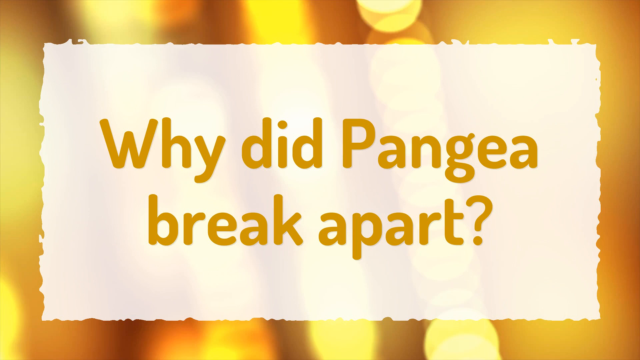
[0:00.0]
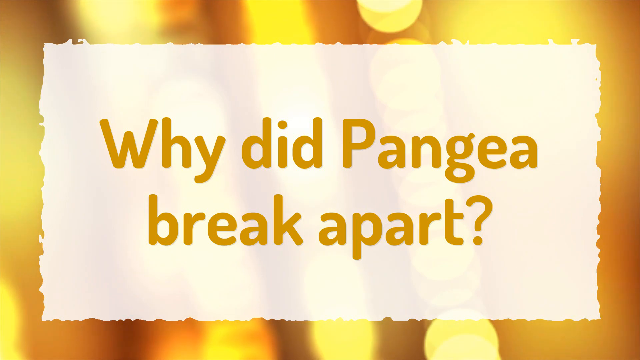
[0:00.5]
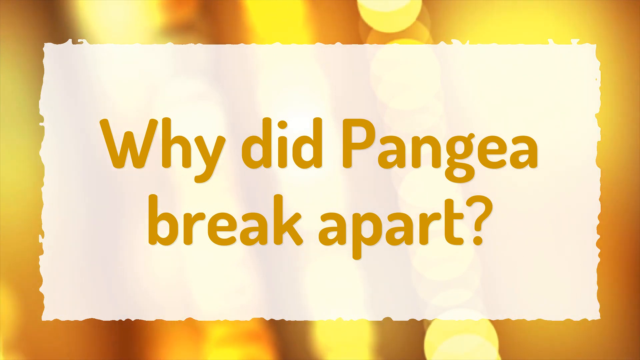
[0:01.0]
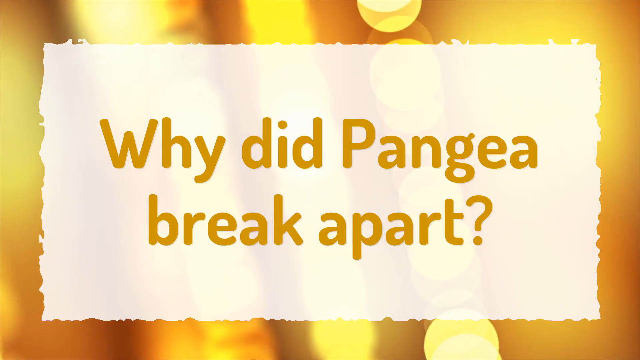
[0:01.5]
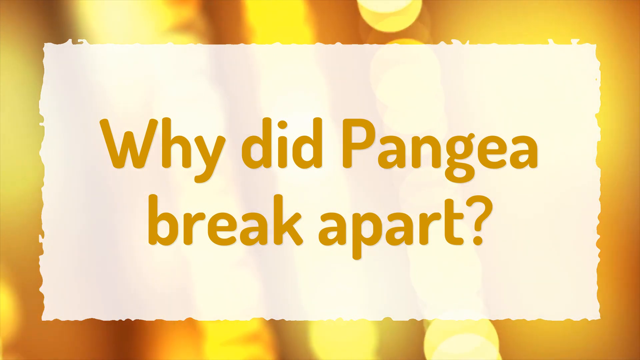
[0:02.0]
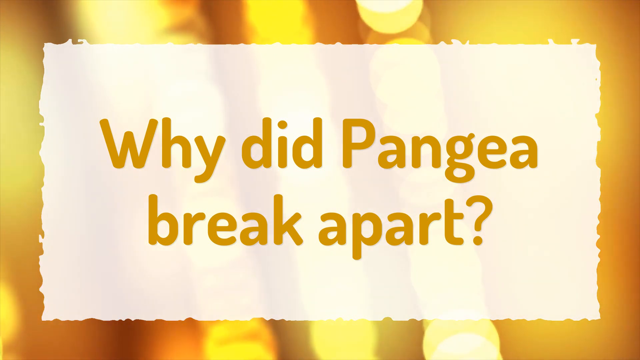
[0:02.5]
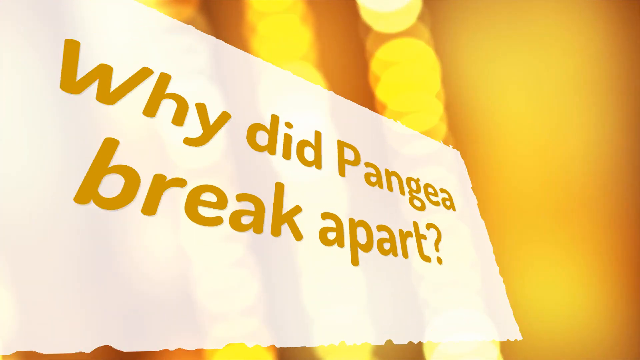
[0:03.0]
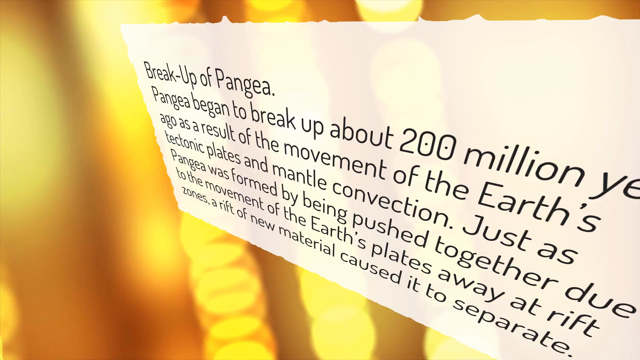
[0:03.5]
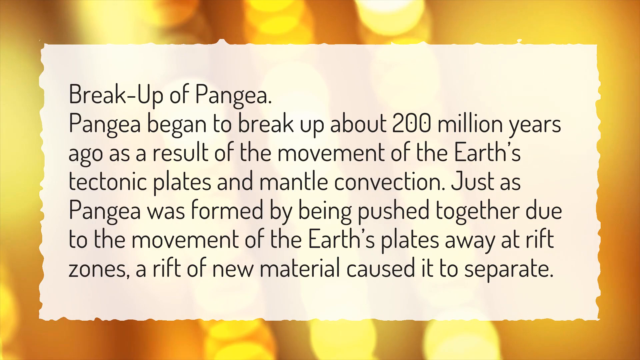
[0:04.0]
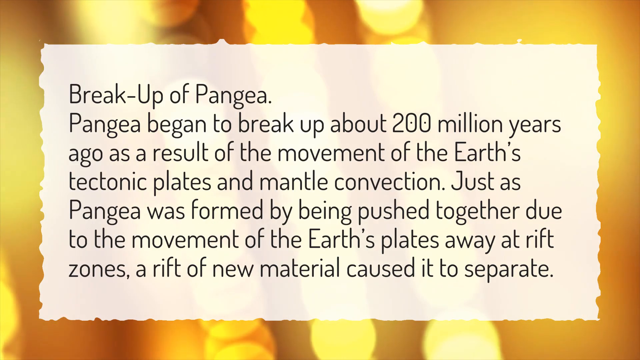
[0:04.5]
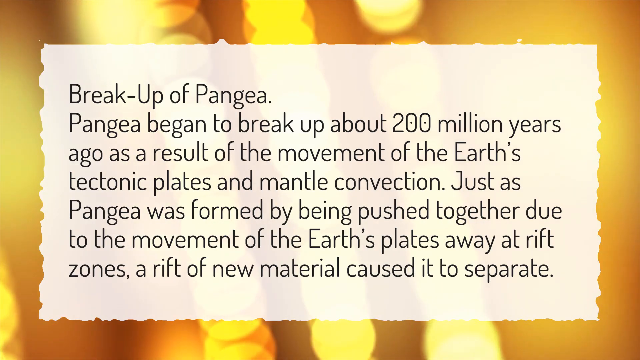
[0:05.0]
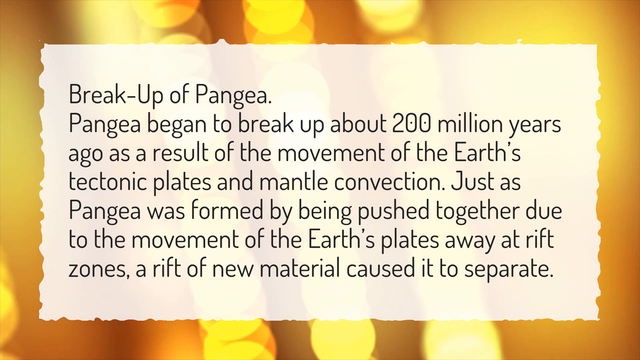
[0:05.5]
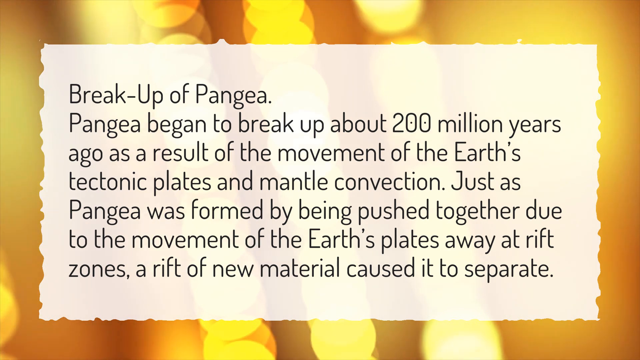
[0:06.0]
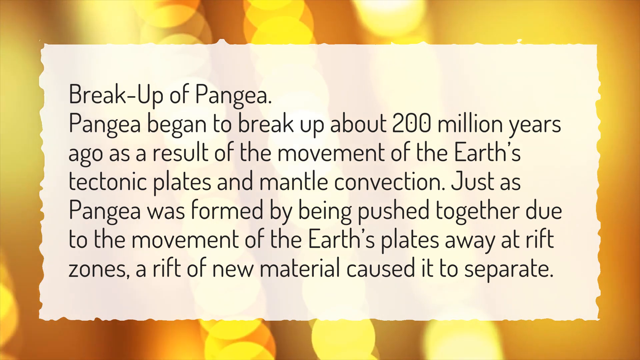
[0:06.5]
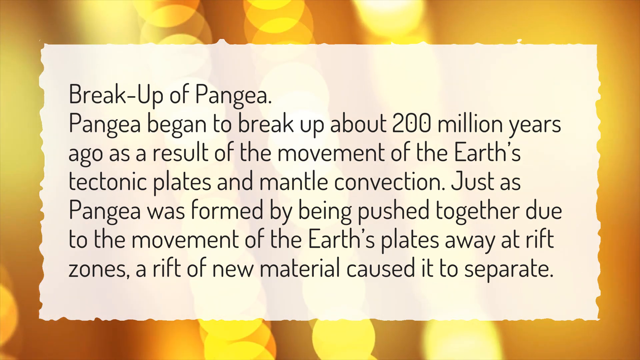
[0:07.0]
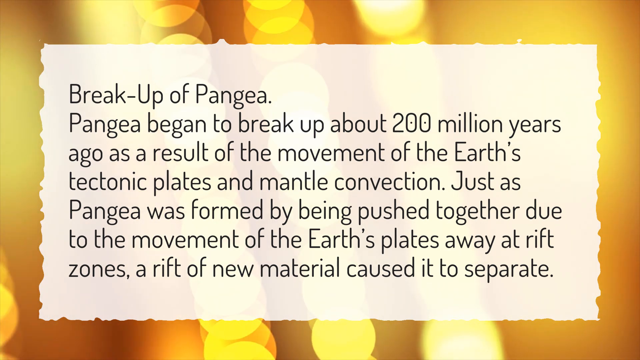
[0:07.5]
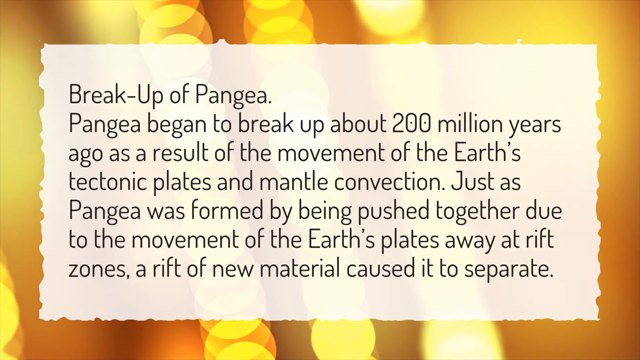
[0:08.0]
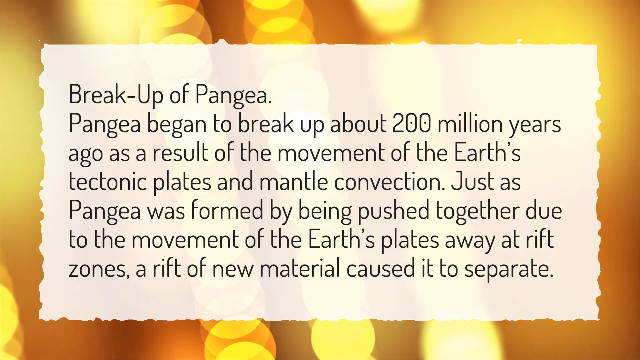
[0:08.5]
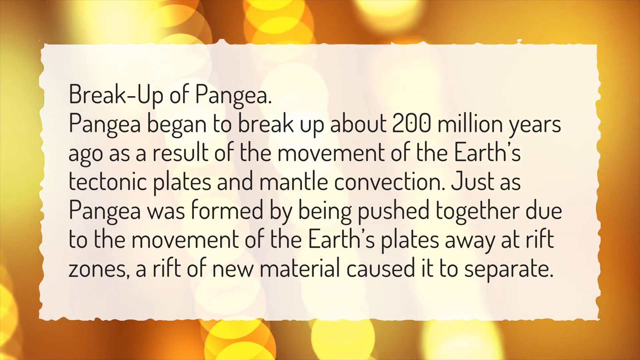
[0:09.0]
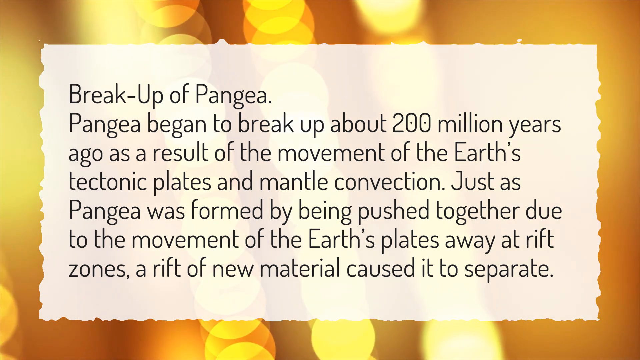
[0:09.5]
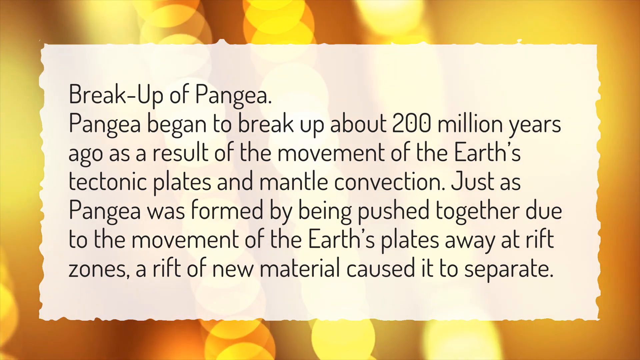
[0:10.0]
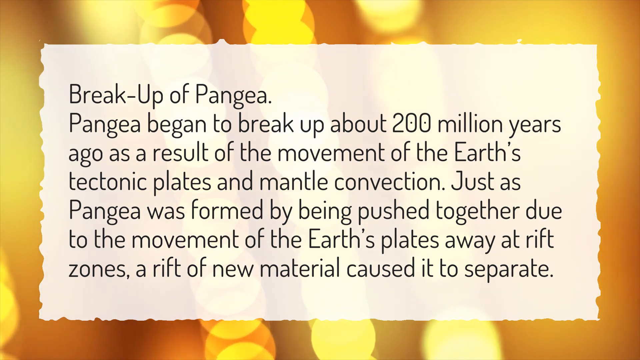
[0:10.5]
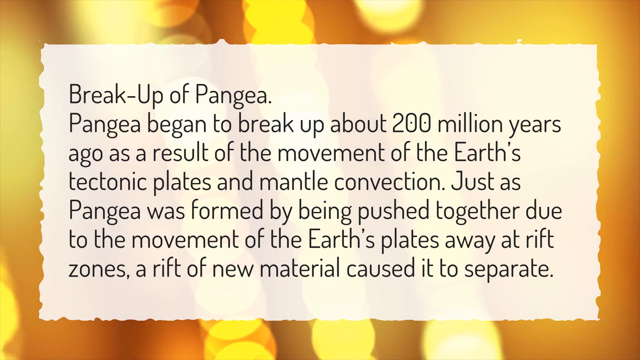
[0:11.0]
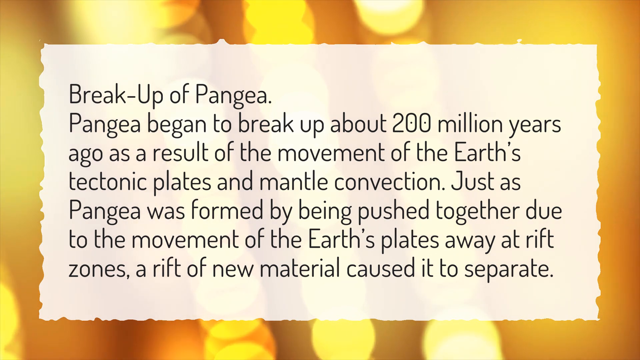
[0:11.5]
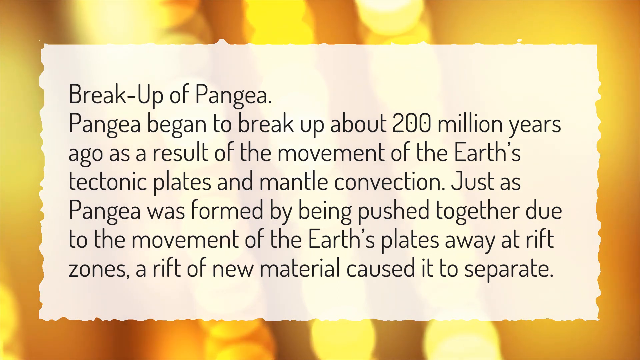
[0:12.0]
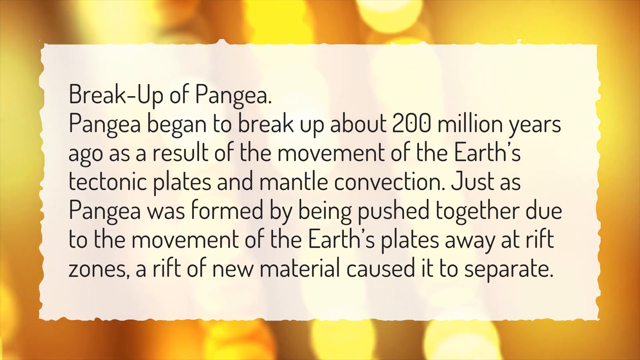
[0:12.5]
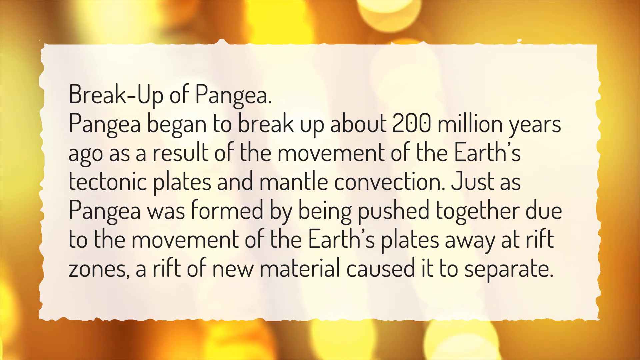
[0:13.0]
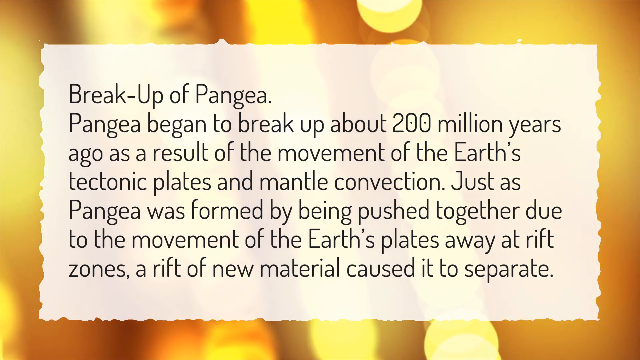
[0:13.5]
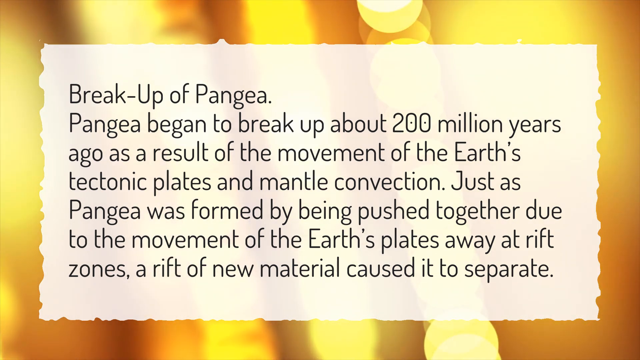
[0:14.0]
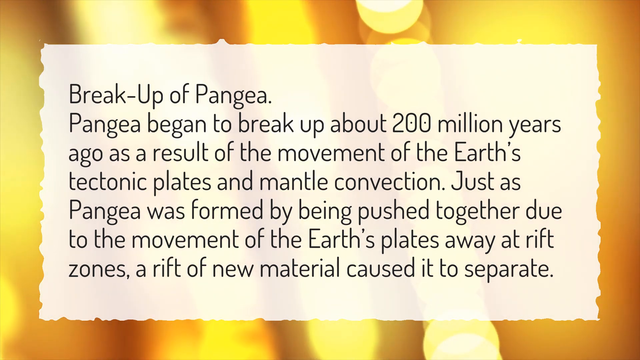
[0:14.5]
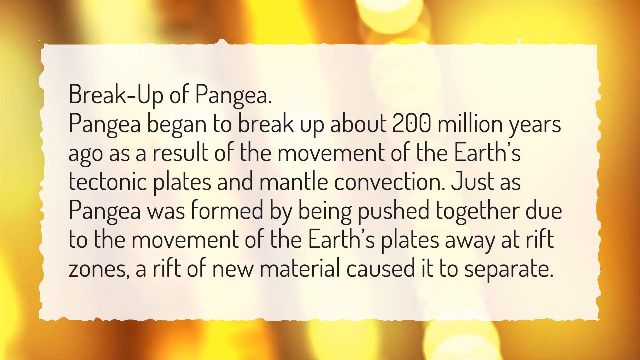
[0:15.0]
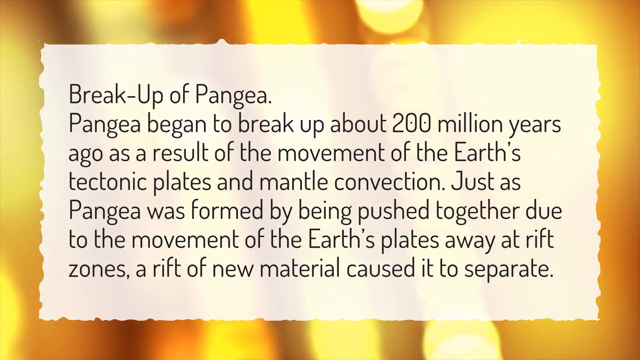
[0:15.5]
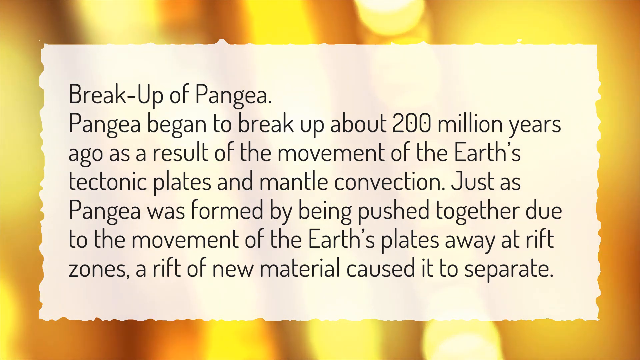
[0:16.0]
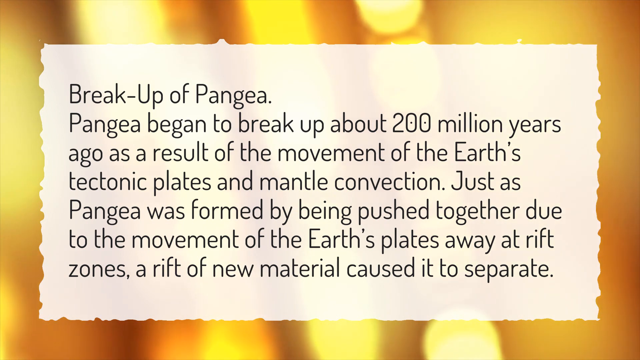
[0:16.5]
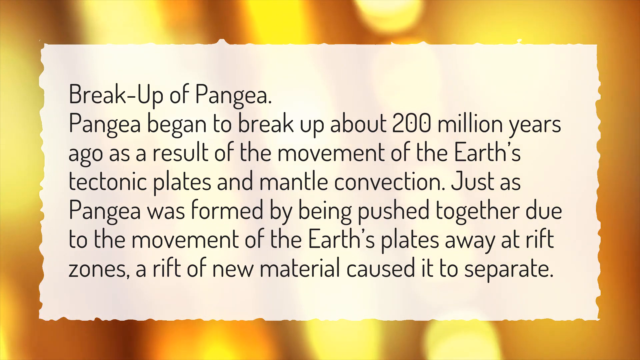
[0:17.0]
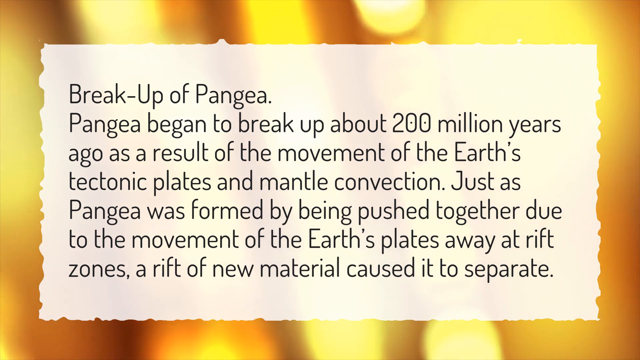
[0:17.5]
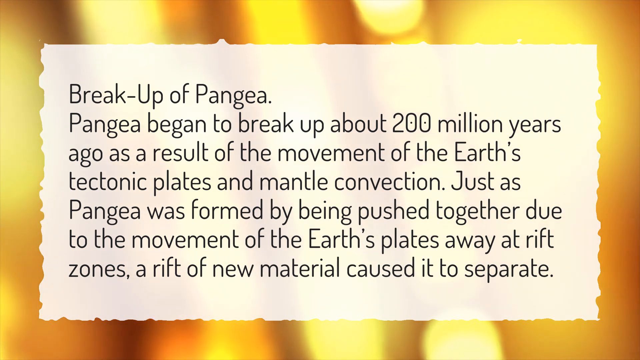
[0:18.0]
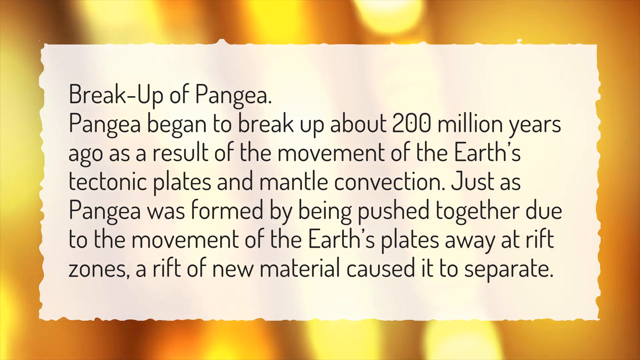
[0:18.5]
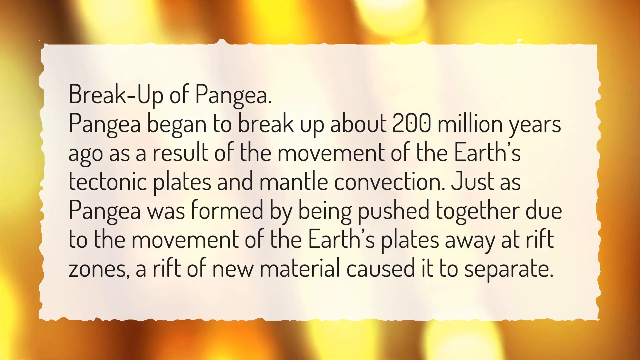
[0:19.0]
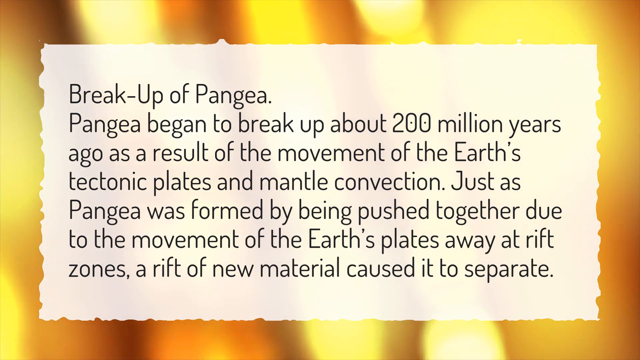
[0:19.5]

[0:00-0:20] A presentation titled "Why did Pangaea break apart?" appears in yellow golden text on a white background, and just beyond it are golden yellow, sparkly lights. Next comes another slide of text that reads: "Breakup of Pangaea. Pangaea began to break up about 200 million years ago as a result of the movement of the Earth's tectonic plates and mantle convection. Just as Pangaea was formed by being pushed together due to the movement of the Earth's plates away at rift zones, a rift of new material caused it to separate." The video is styled like a PowerPoint presentation, and no presenter's name is shown at the beginning.